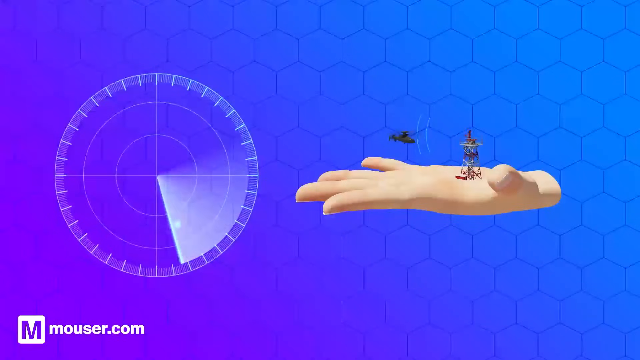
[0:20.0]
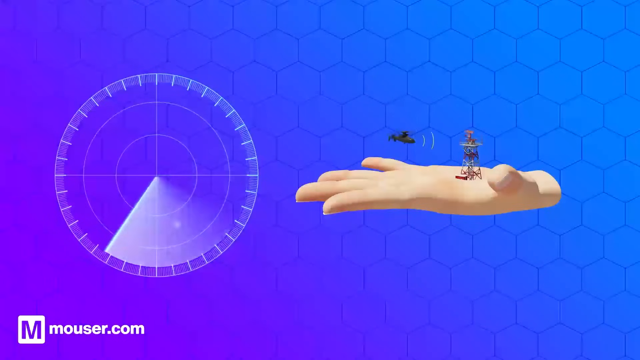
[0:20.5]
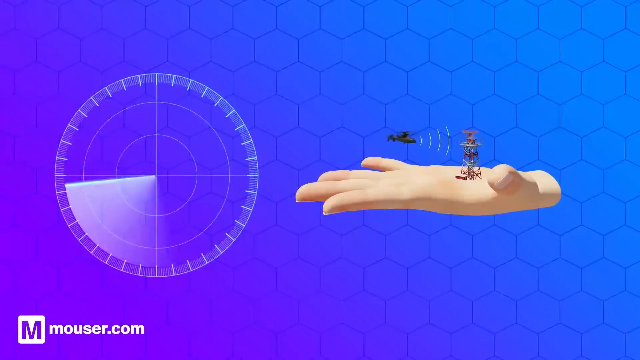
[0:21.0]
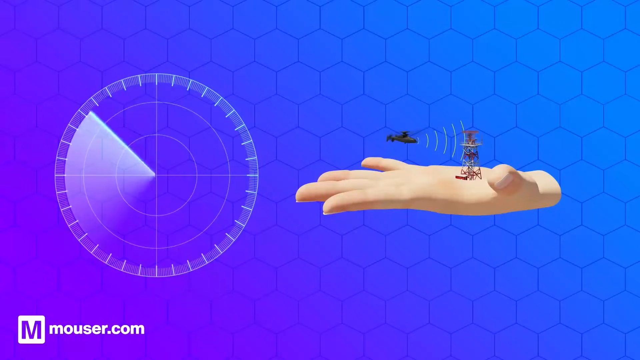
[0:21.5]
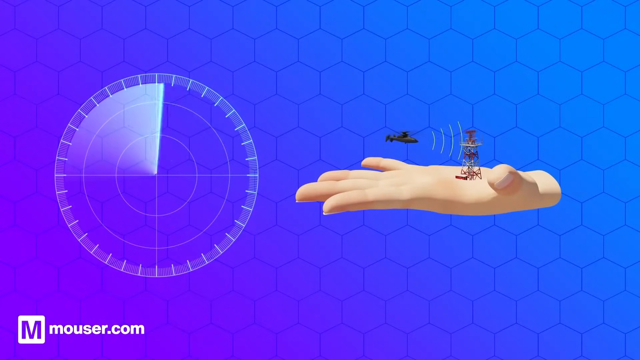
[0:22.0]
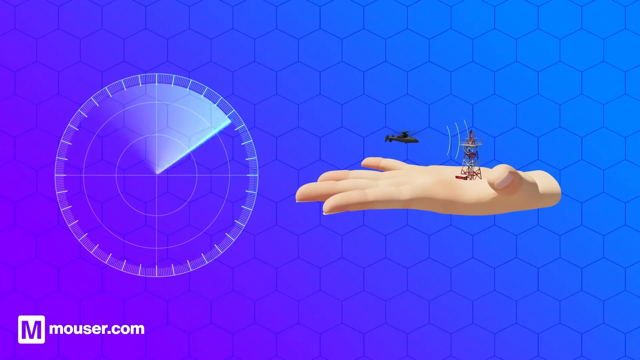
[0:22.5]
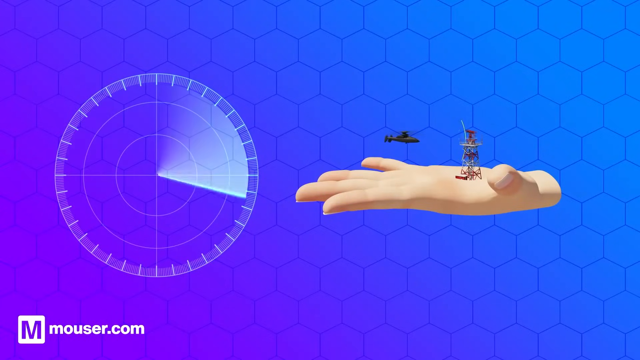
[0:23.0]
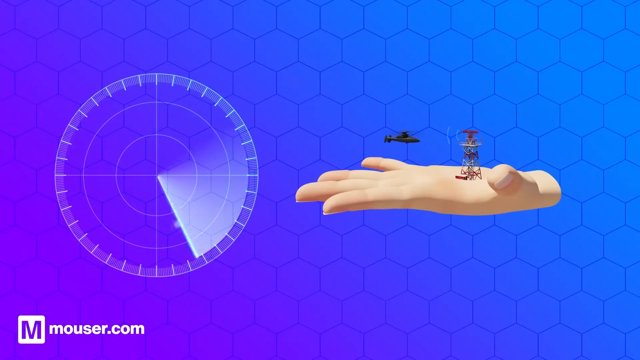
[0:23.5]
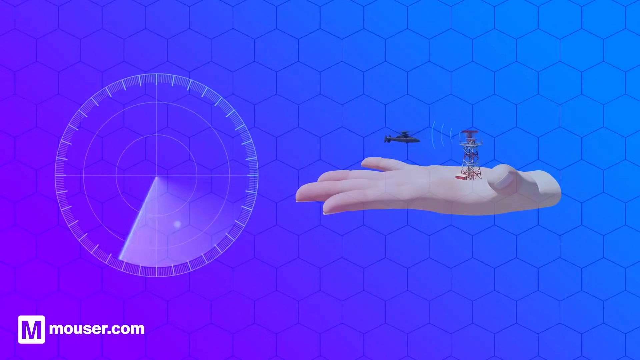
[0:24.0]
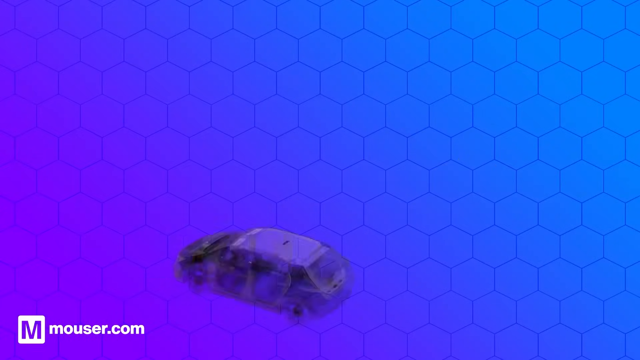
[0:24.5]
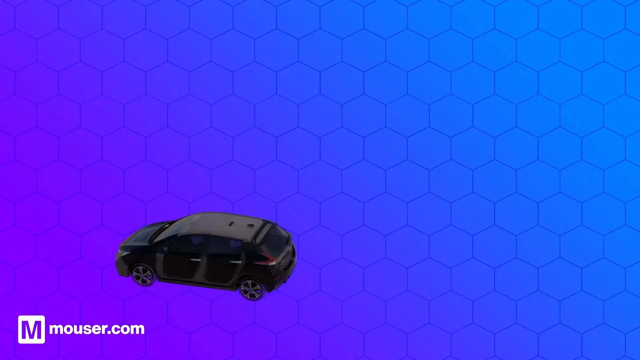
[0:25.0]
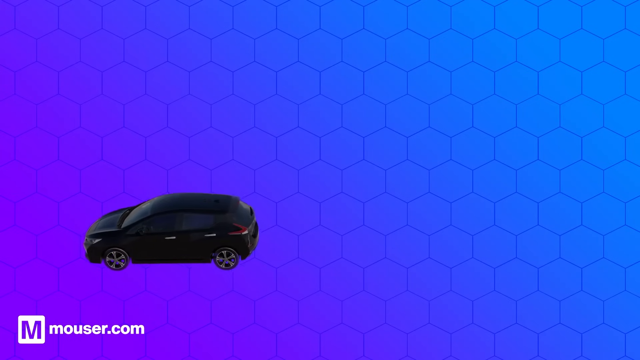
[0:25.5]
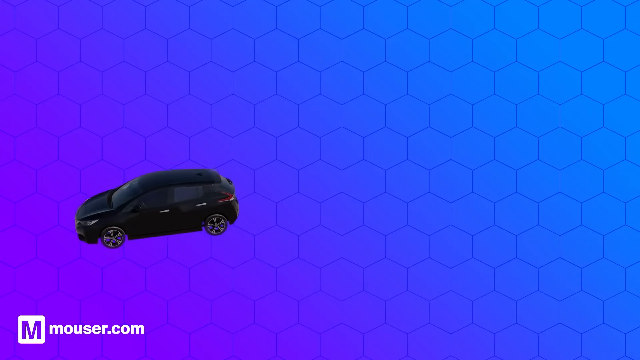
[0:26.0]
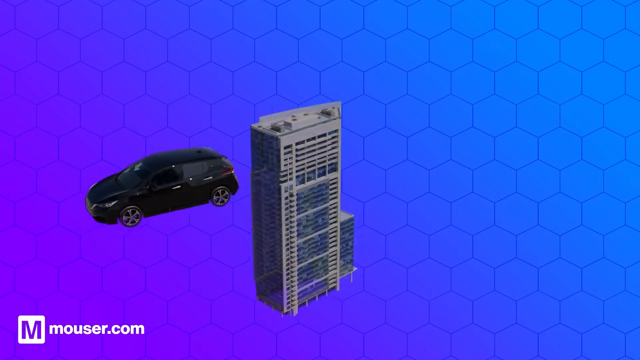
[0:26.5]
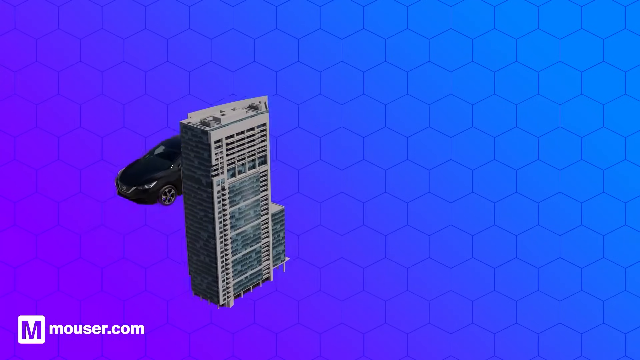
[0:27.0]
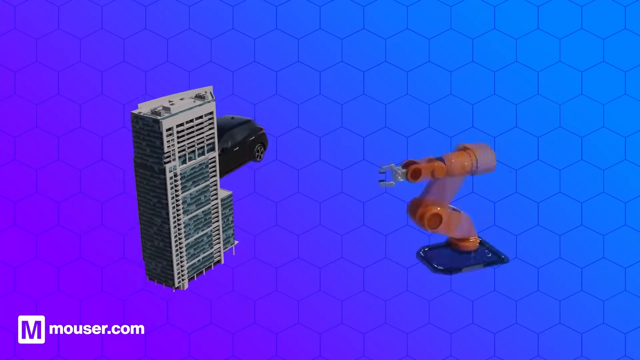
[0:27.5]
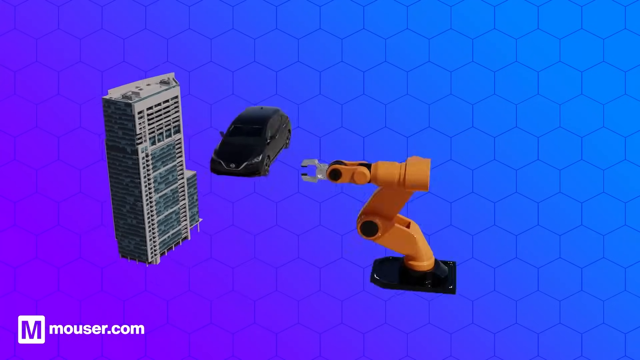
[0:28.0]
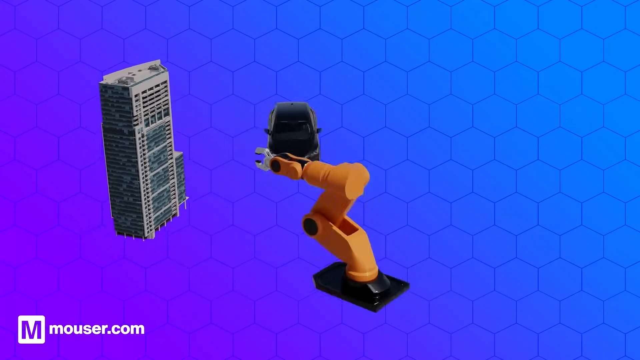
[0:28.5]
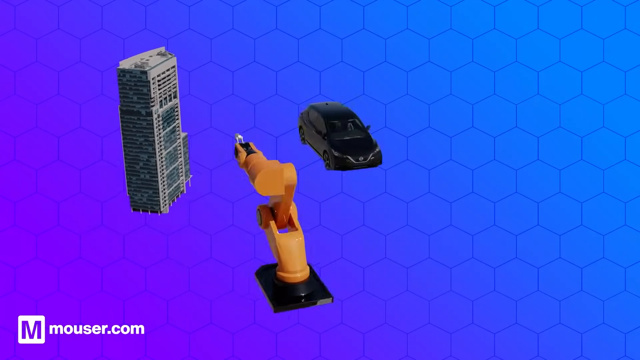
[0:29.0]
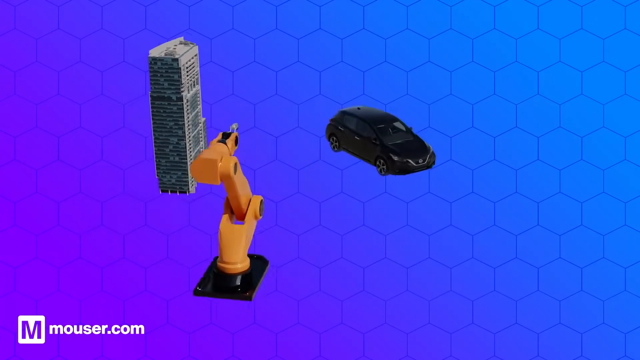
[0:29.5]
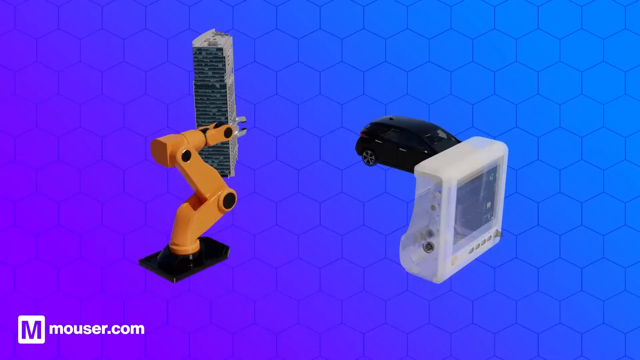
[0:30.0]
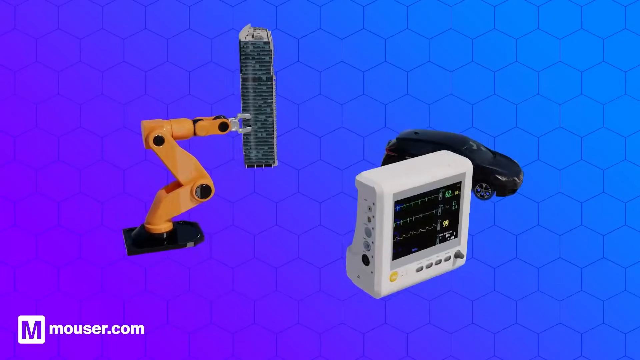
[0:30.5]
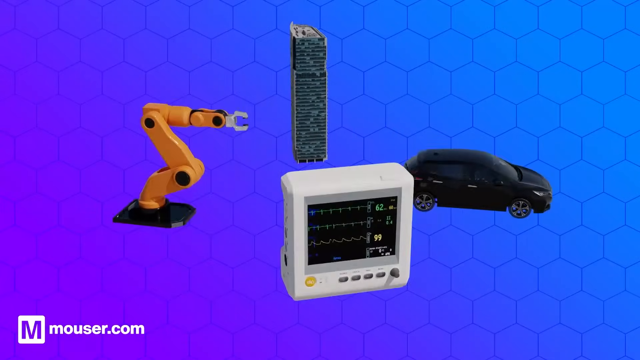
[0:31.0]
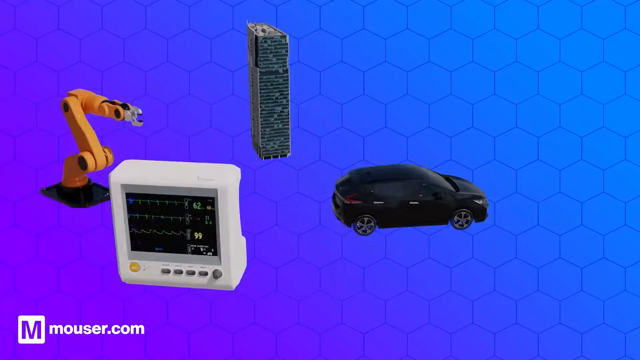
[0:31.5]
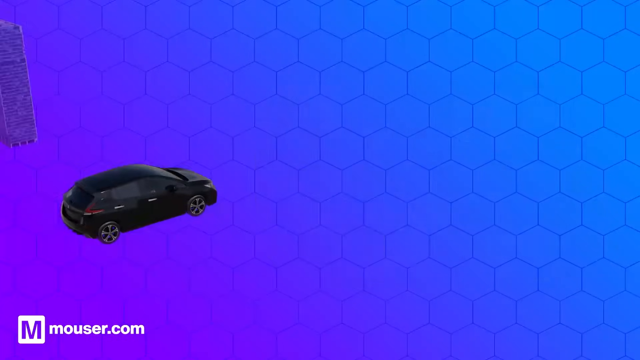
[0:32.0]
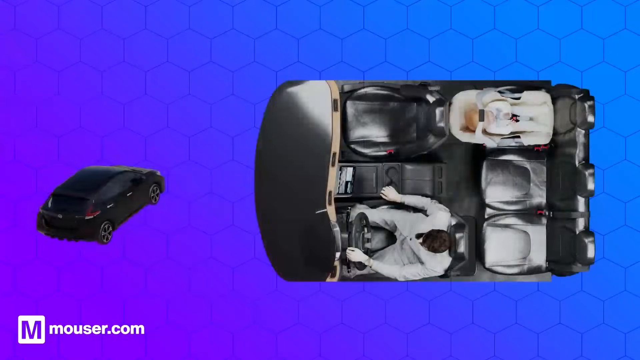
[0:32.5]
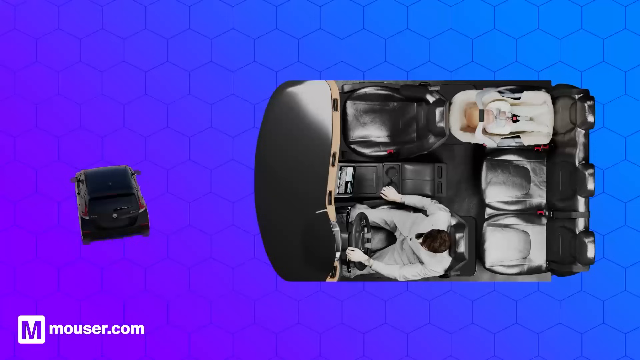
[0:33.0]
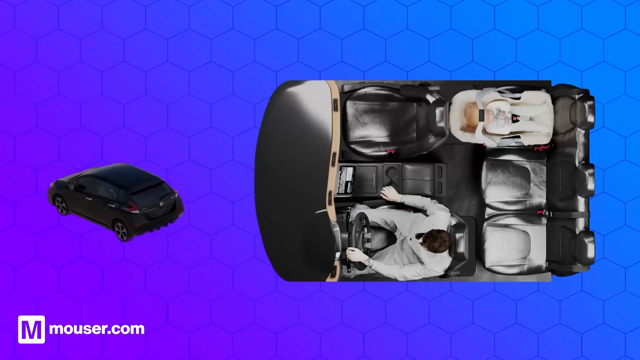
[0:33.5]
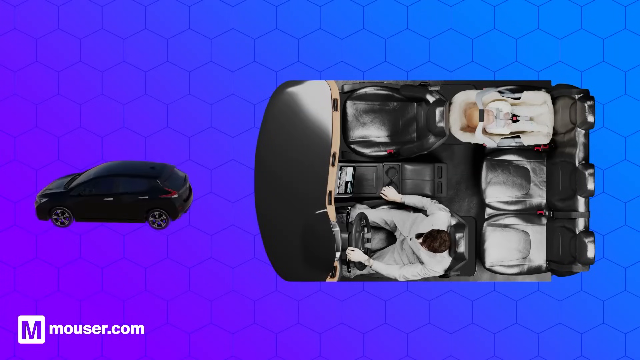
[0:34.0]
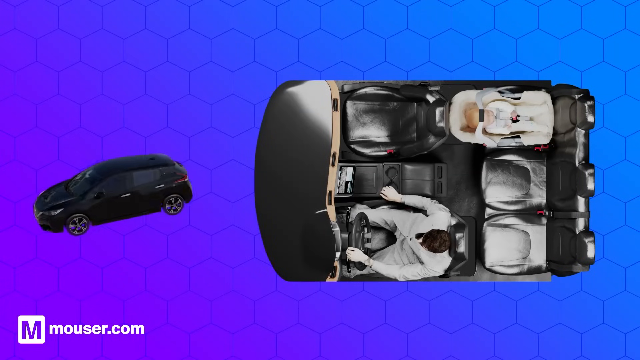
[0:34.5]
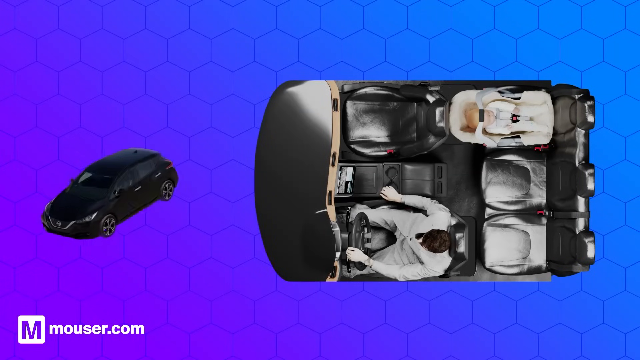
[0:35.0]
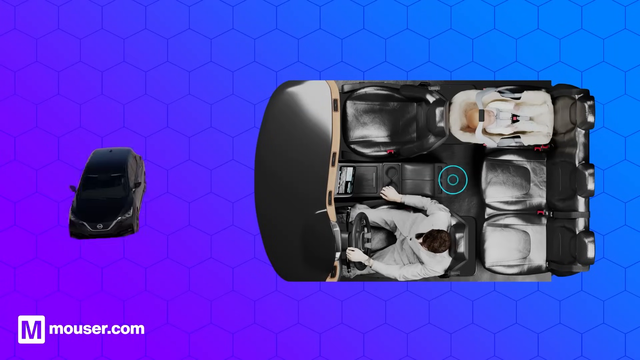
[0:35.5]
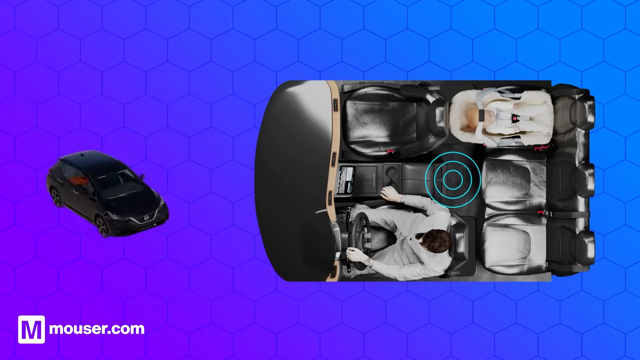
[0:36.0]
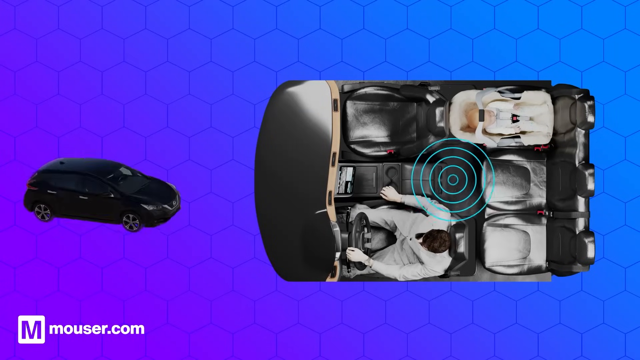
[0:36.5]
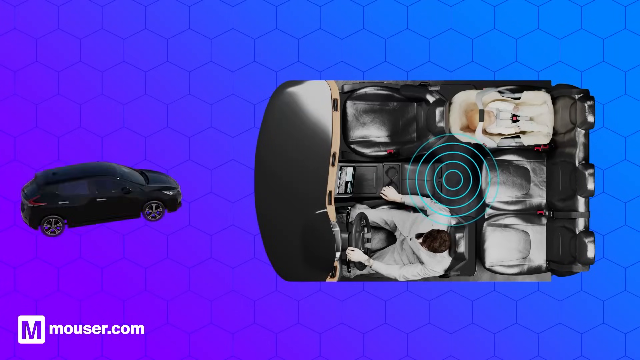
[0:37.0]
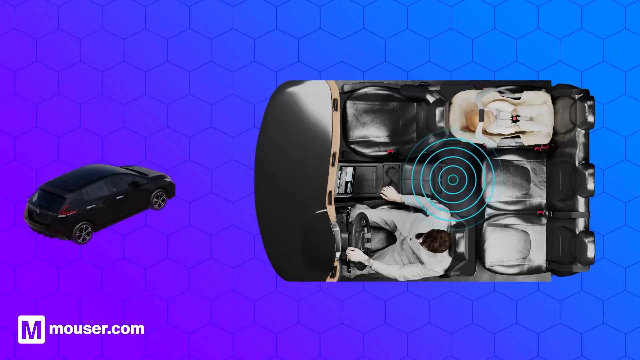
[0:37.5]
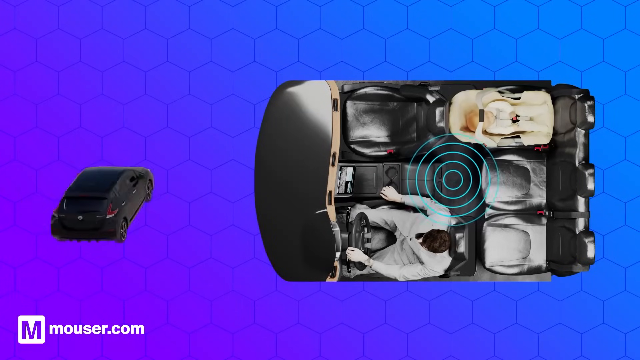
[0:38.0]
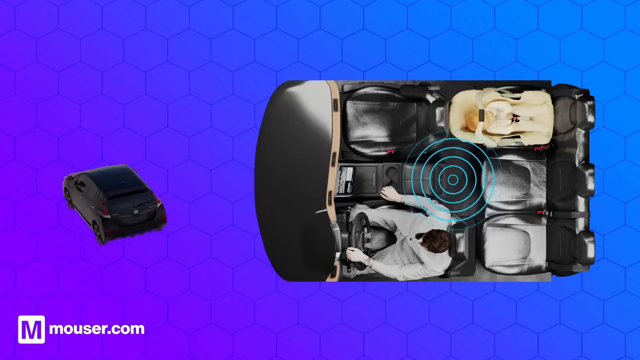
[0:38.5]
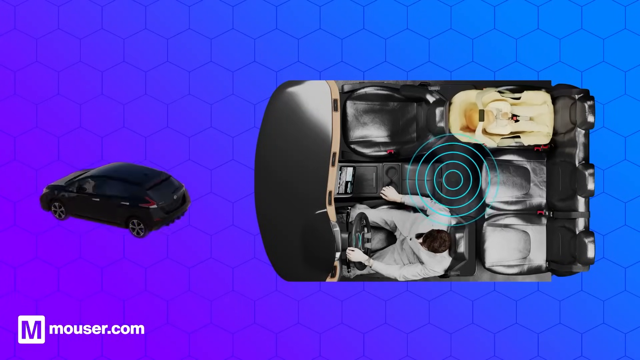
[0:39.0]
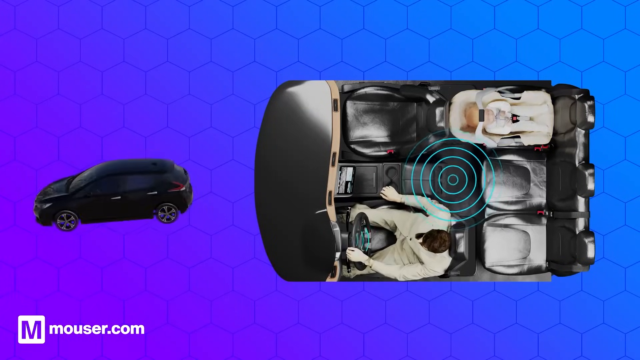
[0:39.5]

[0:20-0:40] Against a bright blue background with a barely visible honeycomb pattern, a large human hand on the right-hand side of the screen appears to be holding a red and white tower. To the left of the tower, a dark helicopter hovers, and on the left-hand side of the screen a round circle rotates clockwise. "Mouser.com" is written in white in the lower left-hand corner. The scene then cuts to a blank blue screen with a black car spinning around, followed by a building and a computer. Next comes a top-angle view of the inside of the black car, where a white crash dummy appears to be in the driver's seat, while the car on the left keeps spinning around. A green signal appears to be emanating from the car.